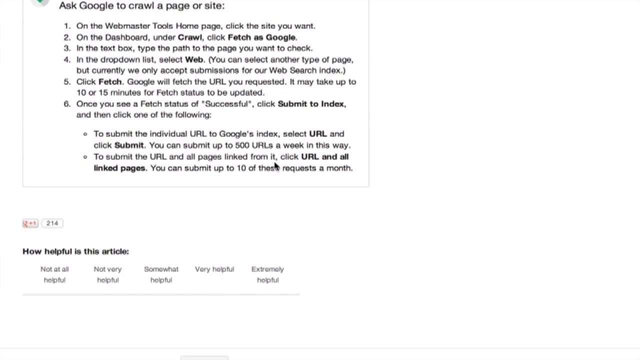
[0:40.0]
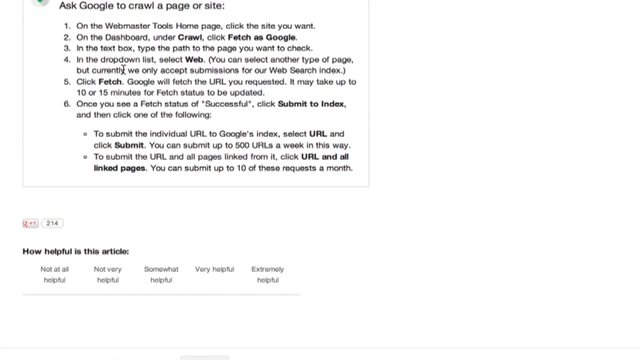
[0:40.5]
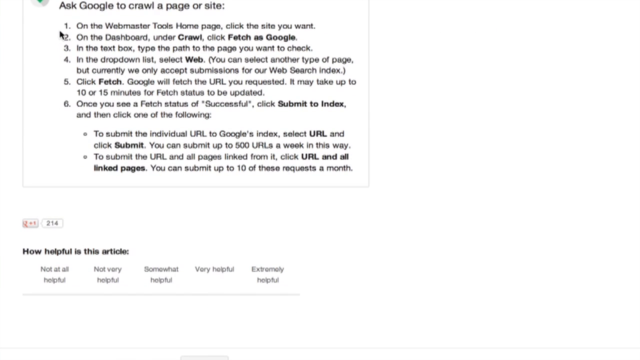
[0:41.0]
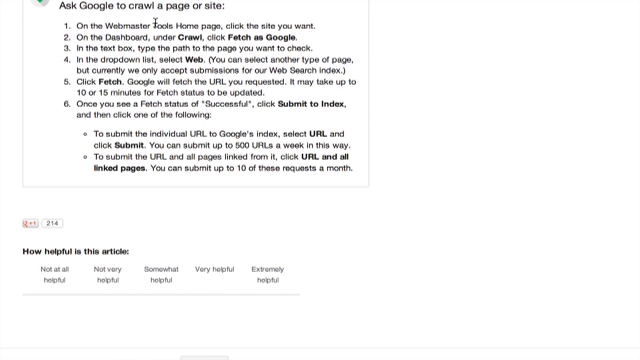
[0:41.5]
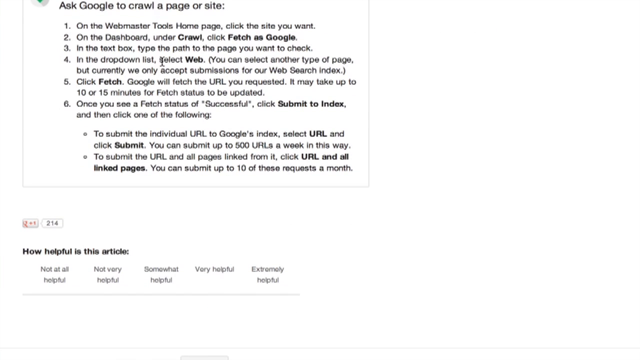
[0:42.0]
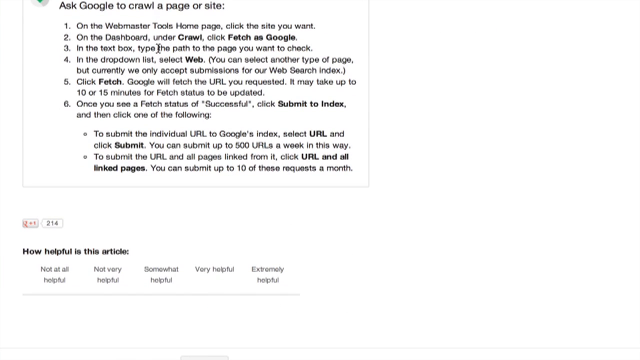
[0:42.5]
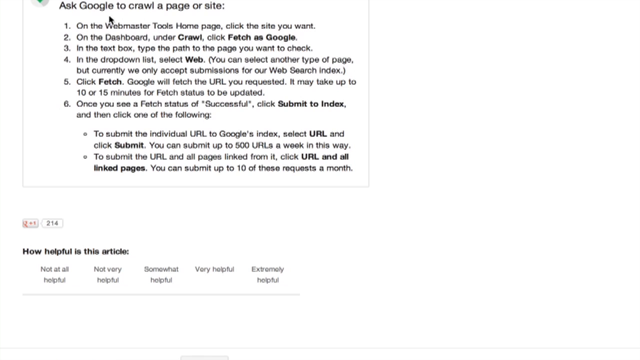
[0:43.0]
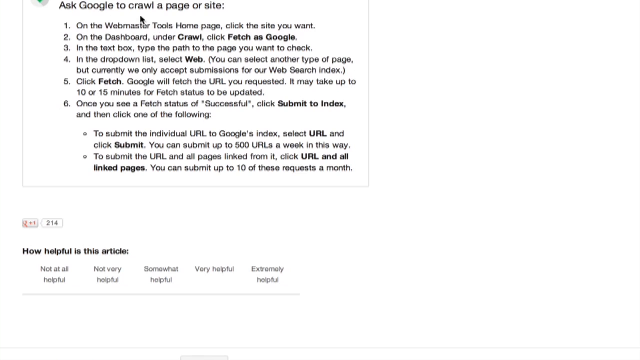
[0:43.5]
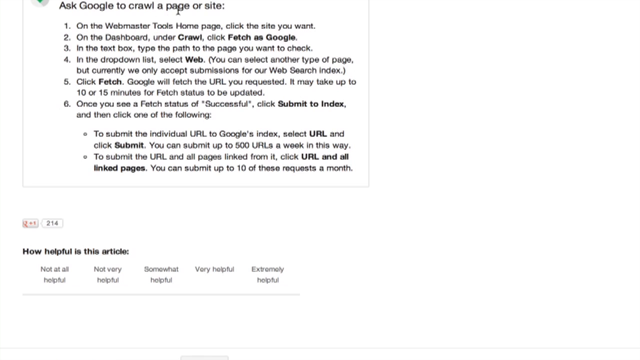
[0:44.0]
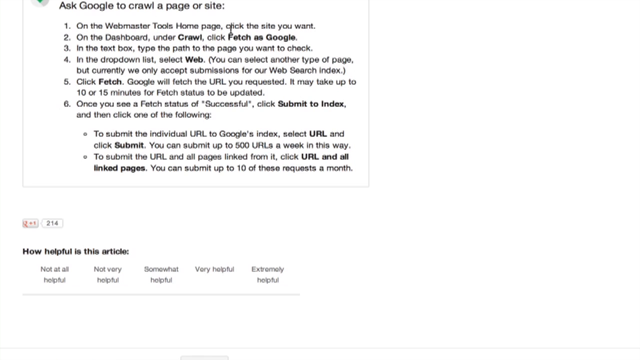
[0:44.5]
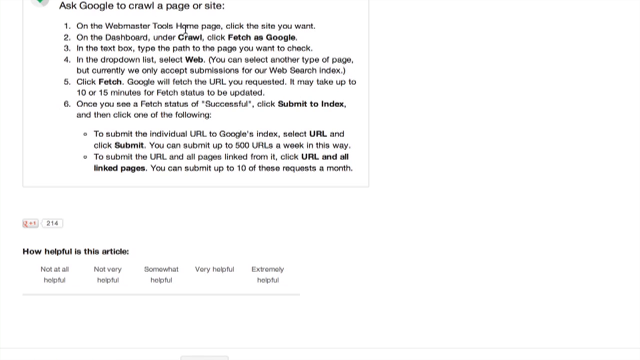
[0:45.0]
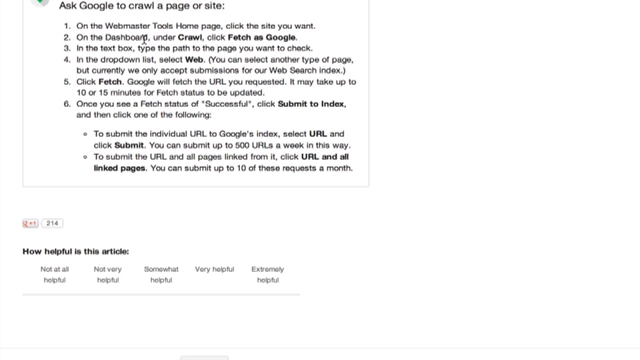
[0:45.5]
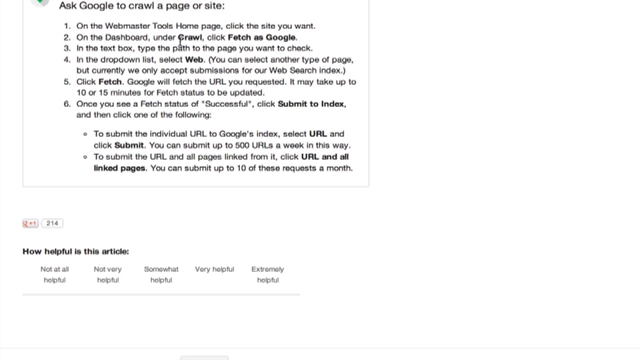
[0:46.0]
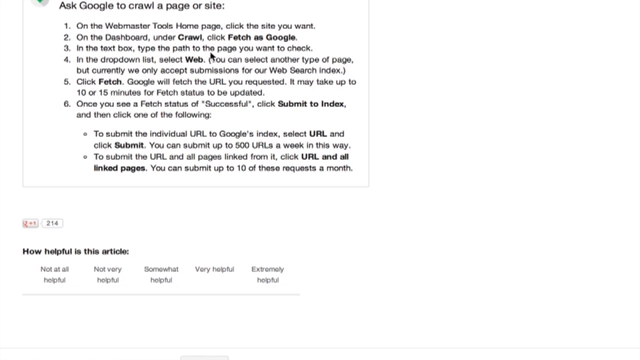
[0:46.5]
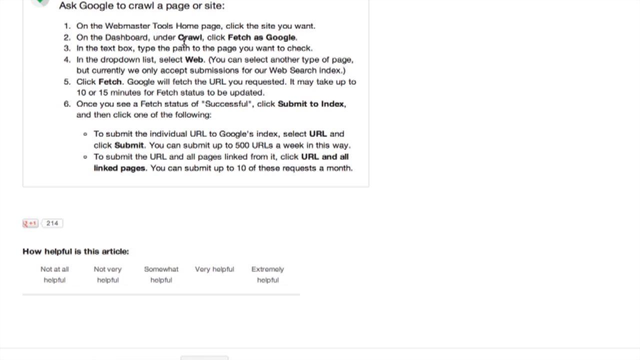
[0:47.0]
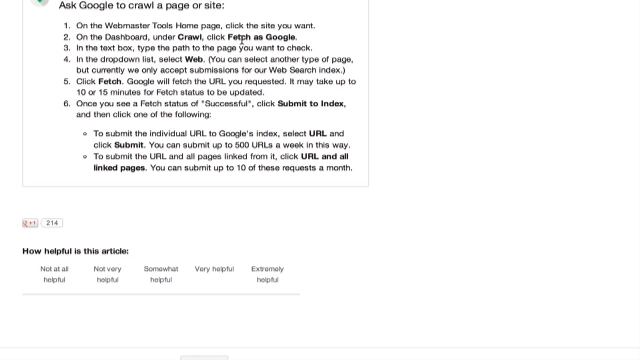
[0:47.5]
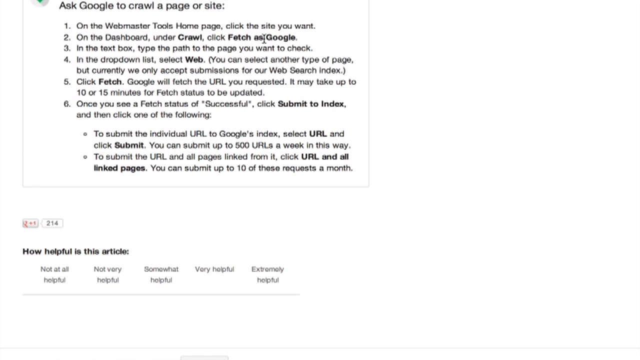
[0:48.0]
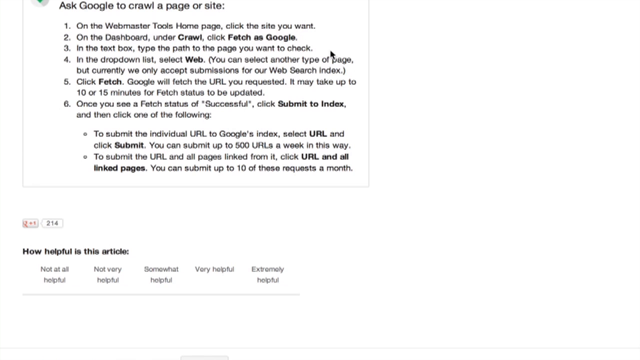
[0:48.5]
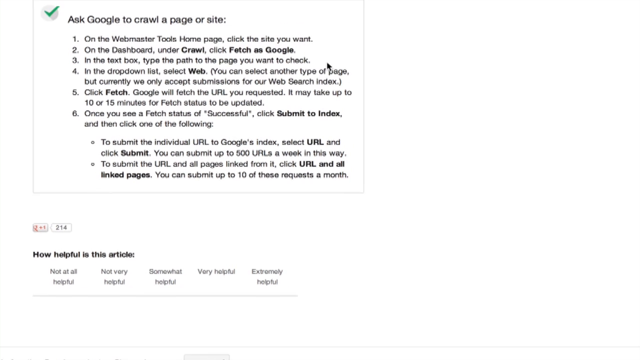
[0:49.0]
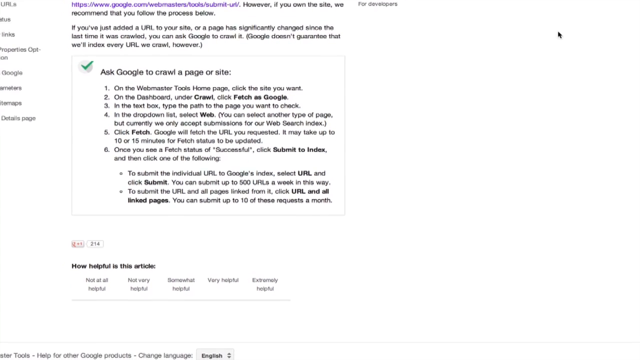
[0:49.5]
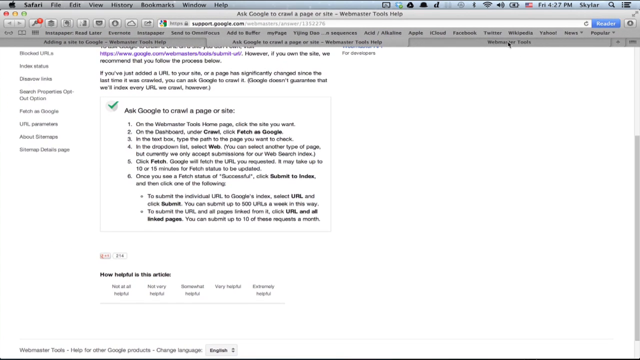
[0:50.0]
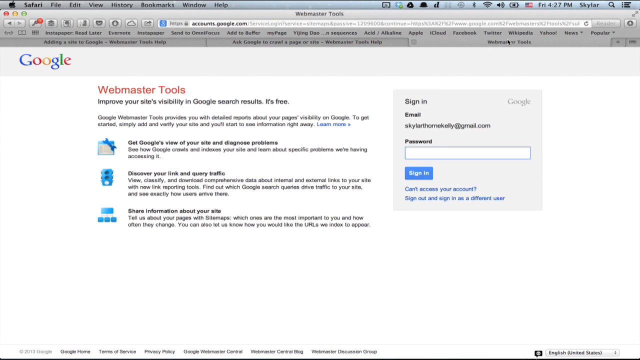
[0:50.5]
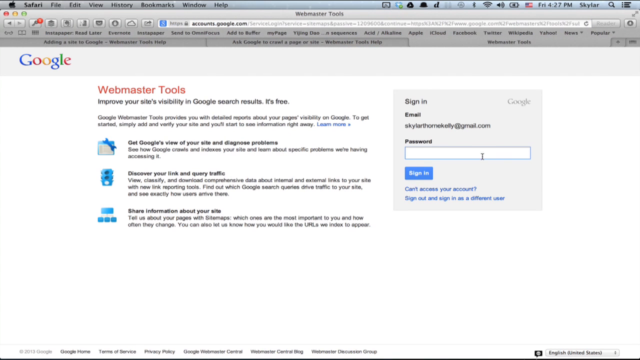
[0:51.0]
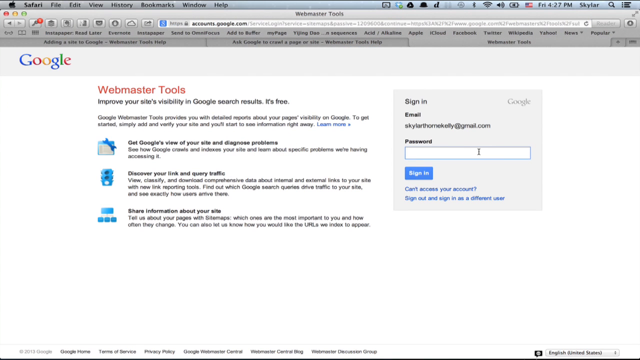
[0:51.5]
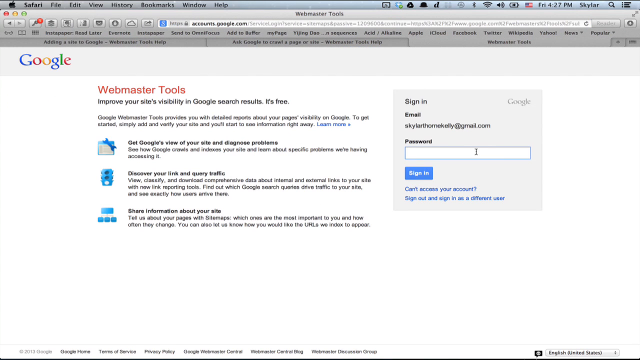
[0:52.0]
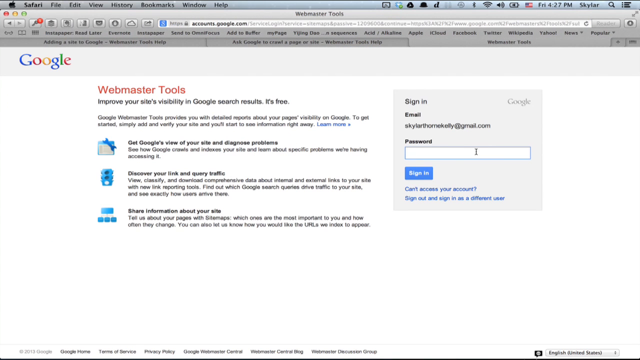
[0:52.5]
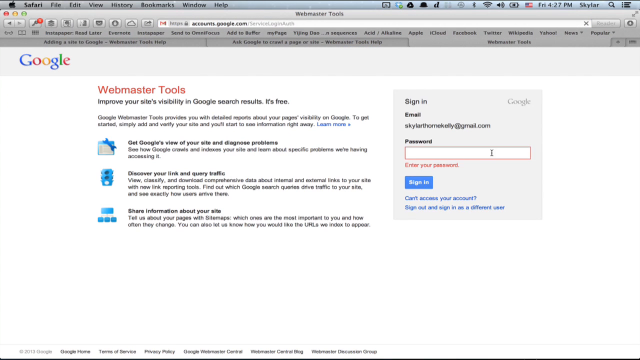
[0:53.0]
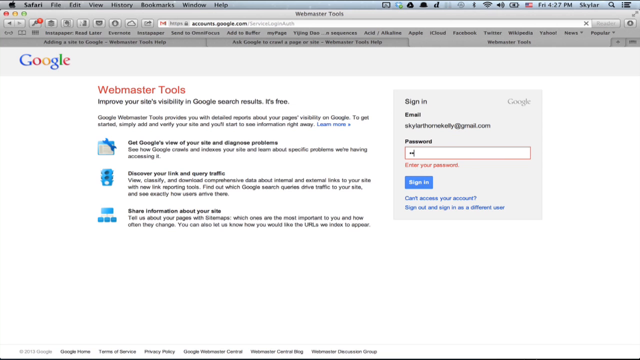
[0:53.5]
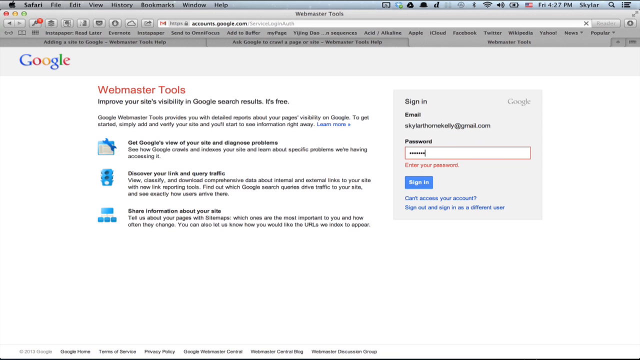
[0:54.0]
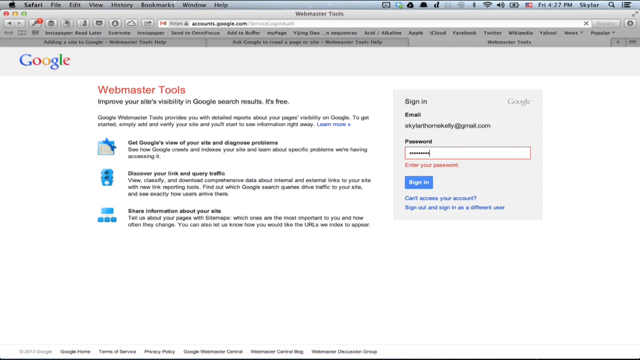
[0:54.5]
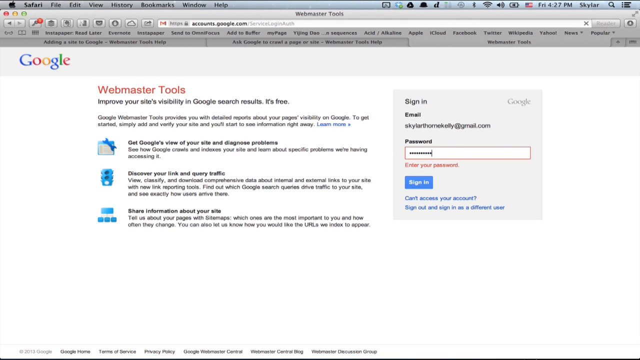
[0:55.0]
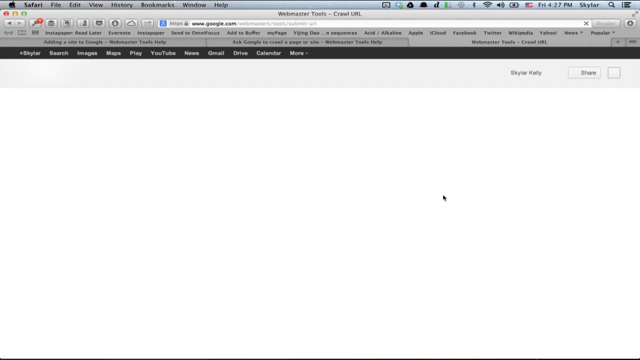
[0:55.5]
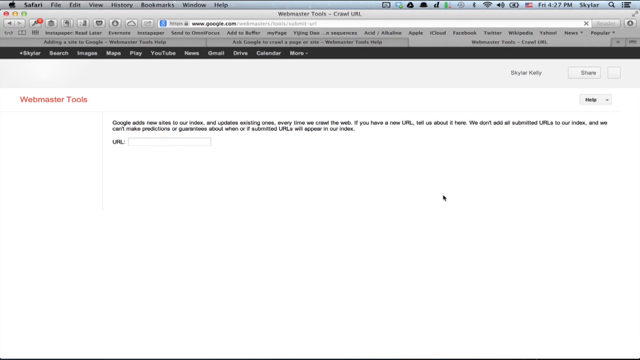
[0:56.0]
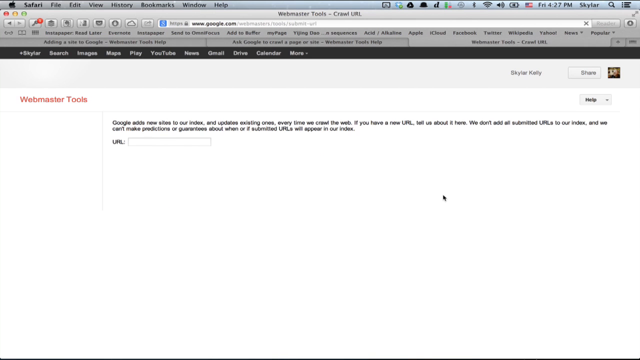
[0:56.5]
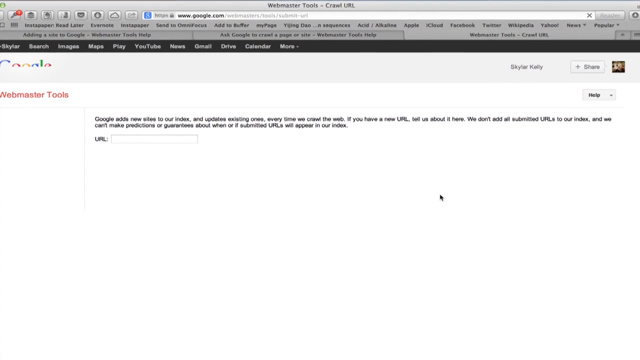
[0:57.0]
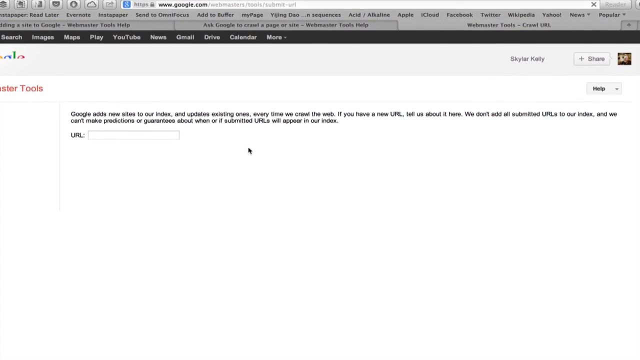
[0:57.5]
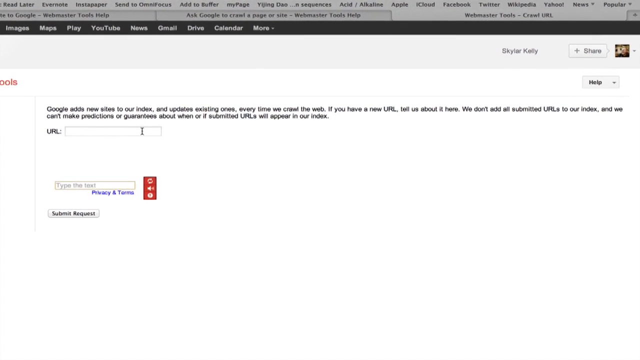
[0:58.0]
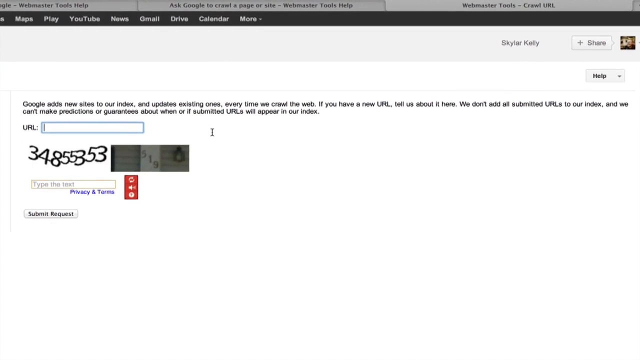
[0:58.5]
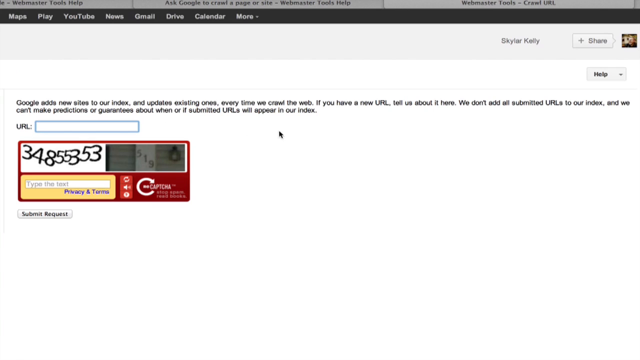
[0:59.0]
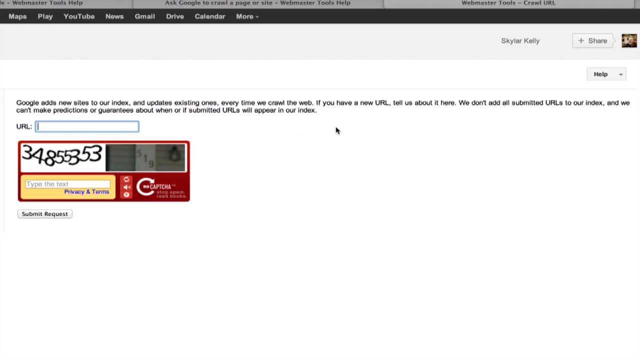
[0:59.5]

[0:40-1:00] The camera is zoomed in closely, so larger text fills the top half of the left side of the screen. In a box with a faint gray border, in black or gray font on white, it reads "ask Google to crawl a page or site:" followed by "1. on the Webmaster Tools homepage, click the site you want", with the cursor just between the dot and the O on this line. Next is "2. on the dashboard, under crawl, click fetch as Google" and "3. in the text box, type the path to the page you want to check", and the instructions continue. A cursor is waved in front of the text, then the view zooms out and the cursor moves to the tabs at the top. There are three tabs: "adding a site to Google, Webmaster Tools Help", "ask Google to crawl a page or site - Webmaster Tools Help" and "Webmaster Tools", which is clicked. The new page has the multicolored Google logo on the left in a faint gray horizontal bar. Below it on the left half of the page, indented maybe an eighth of the way across, is "Webmaster Tools", and below that "improve your site's visibility in Google search results. It's free."